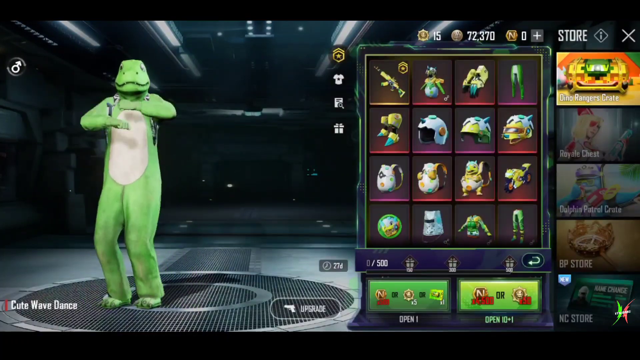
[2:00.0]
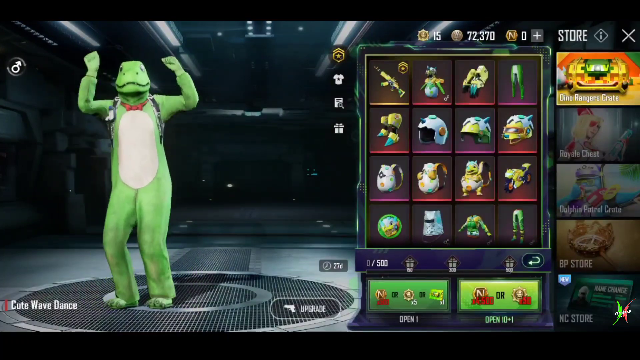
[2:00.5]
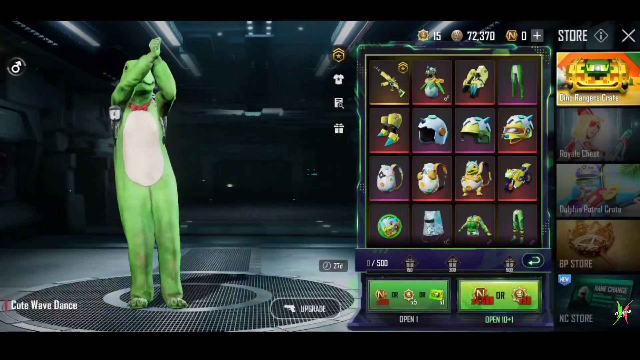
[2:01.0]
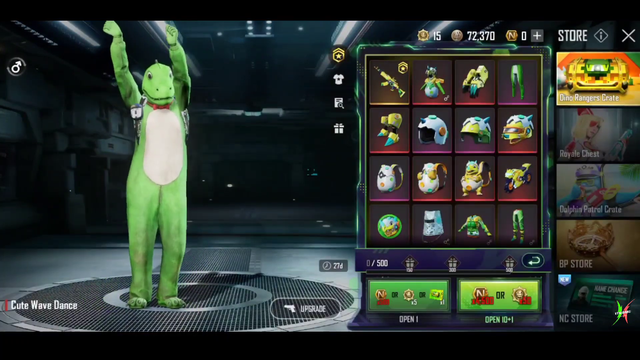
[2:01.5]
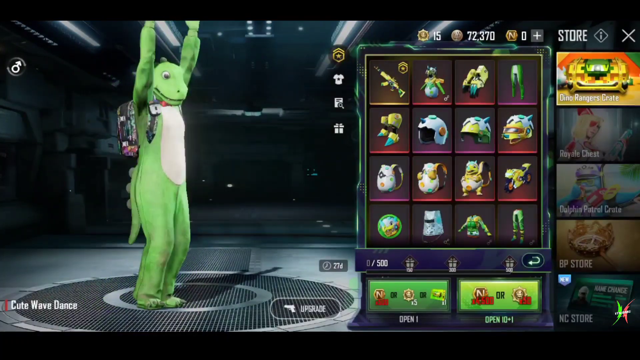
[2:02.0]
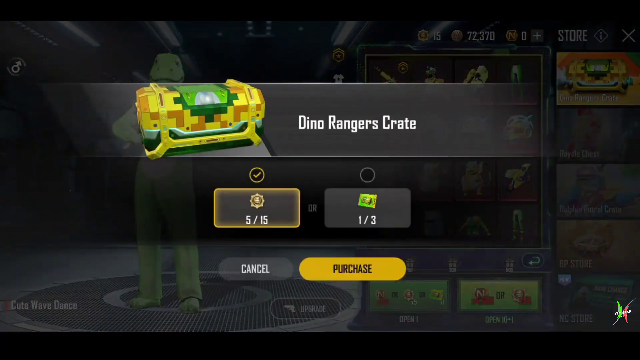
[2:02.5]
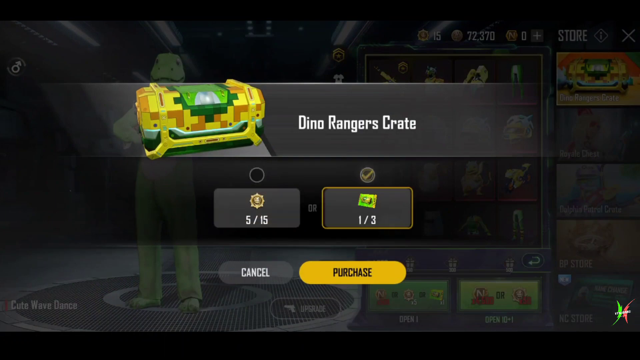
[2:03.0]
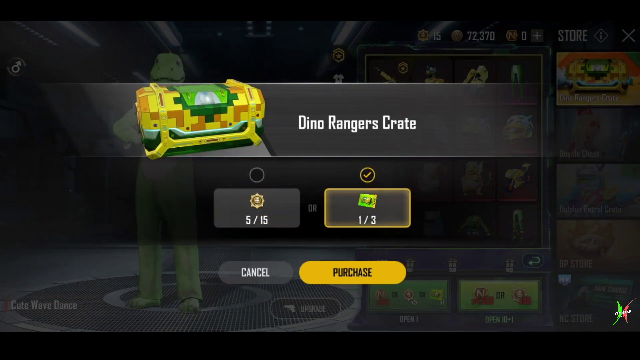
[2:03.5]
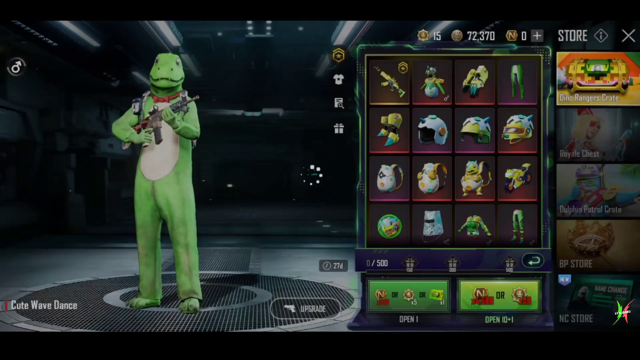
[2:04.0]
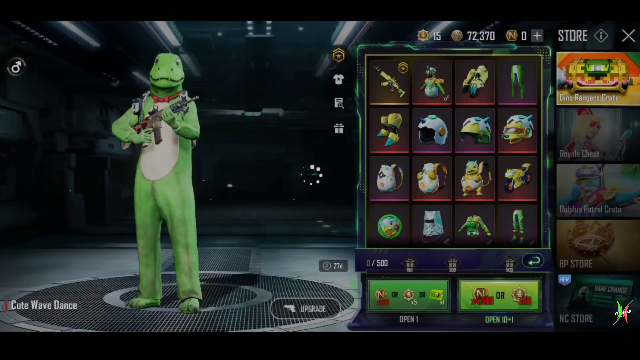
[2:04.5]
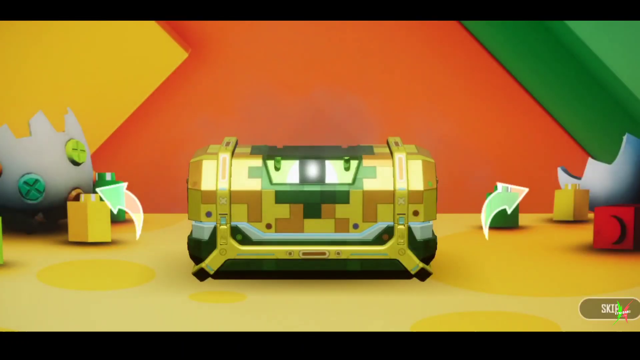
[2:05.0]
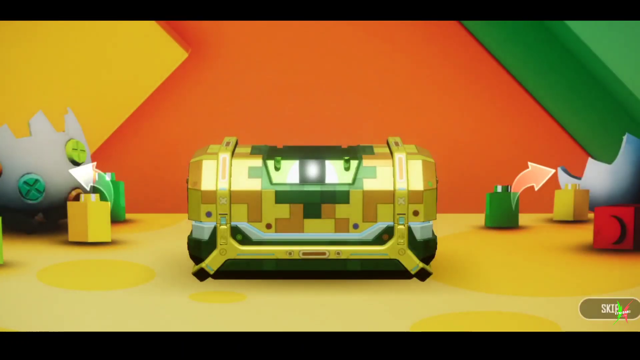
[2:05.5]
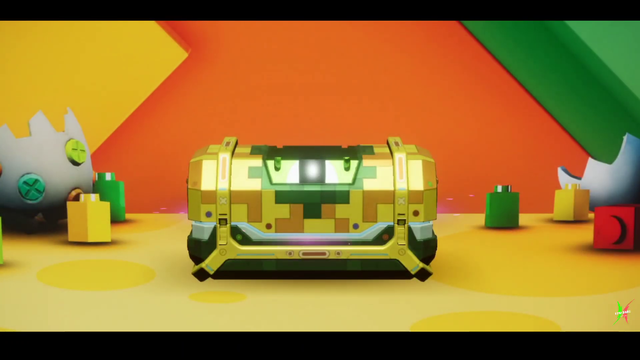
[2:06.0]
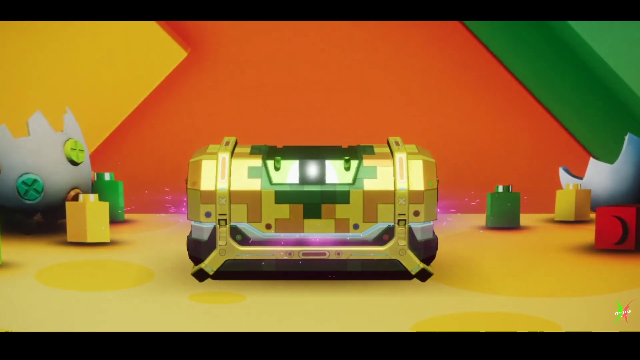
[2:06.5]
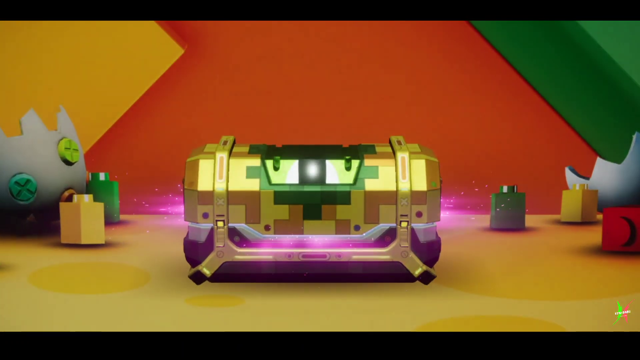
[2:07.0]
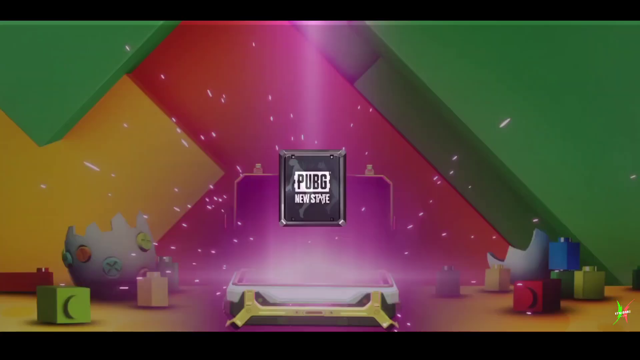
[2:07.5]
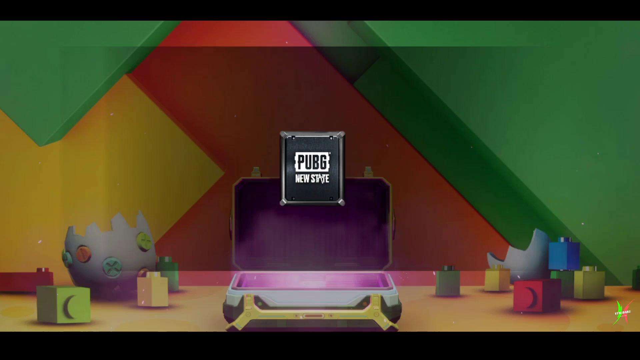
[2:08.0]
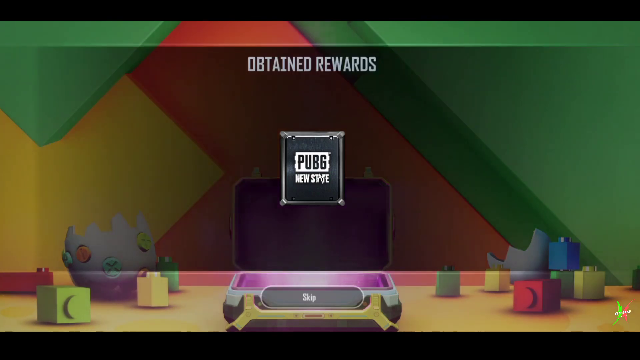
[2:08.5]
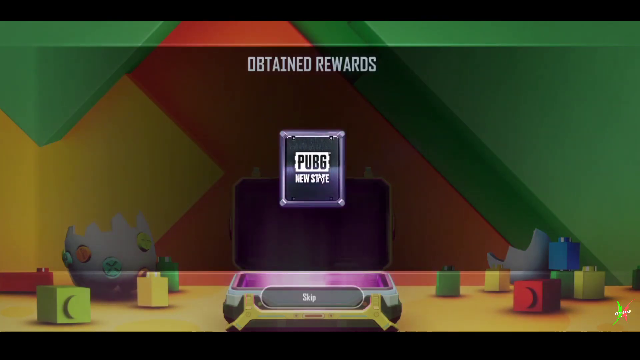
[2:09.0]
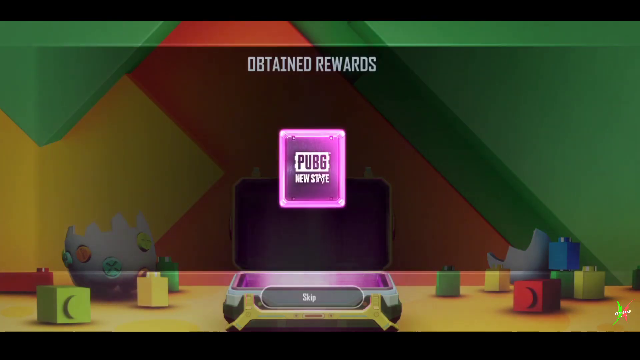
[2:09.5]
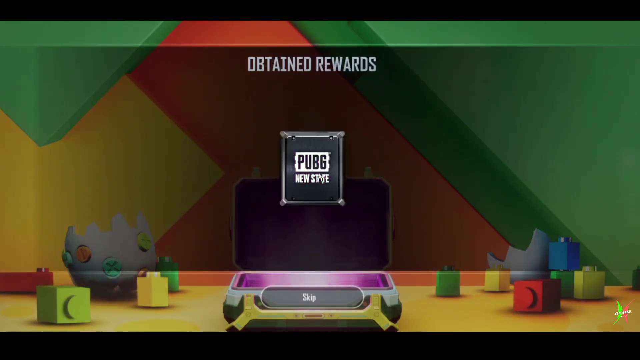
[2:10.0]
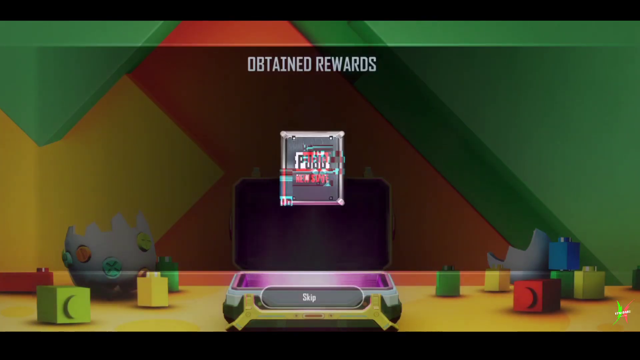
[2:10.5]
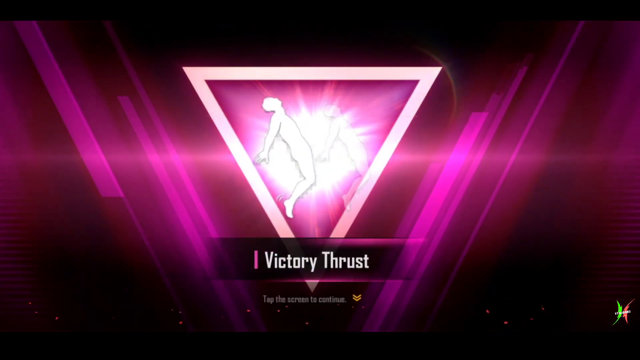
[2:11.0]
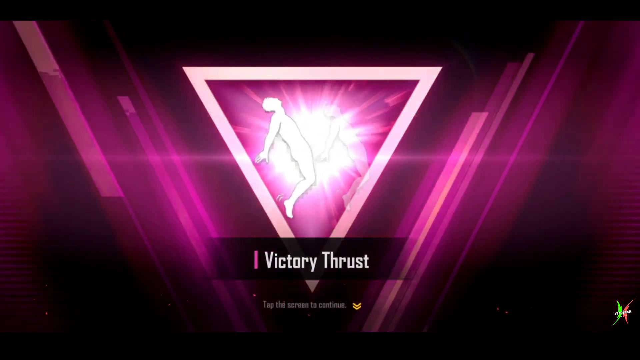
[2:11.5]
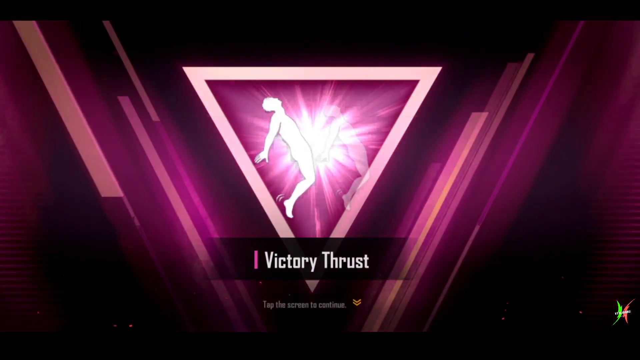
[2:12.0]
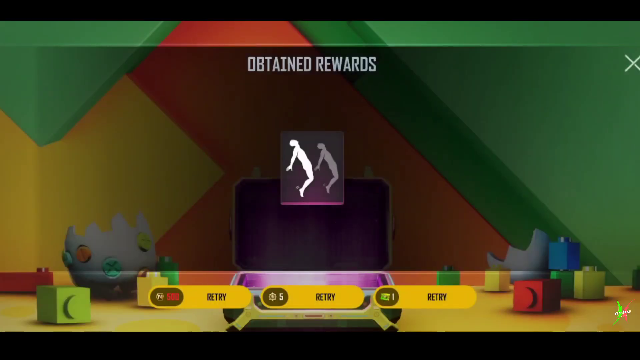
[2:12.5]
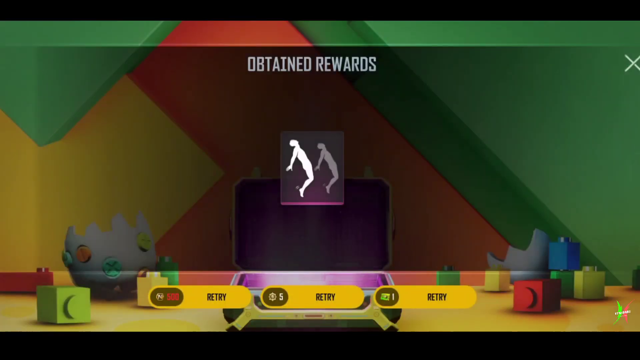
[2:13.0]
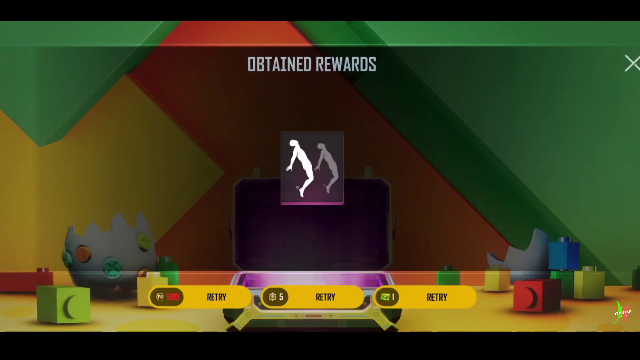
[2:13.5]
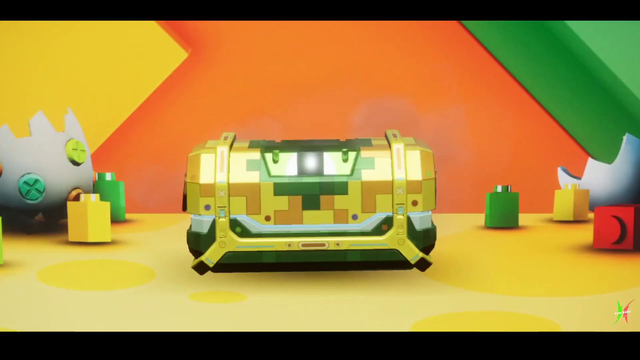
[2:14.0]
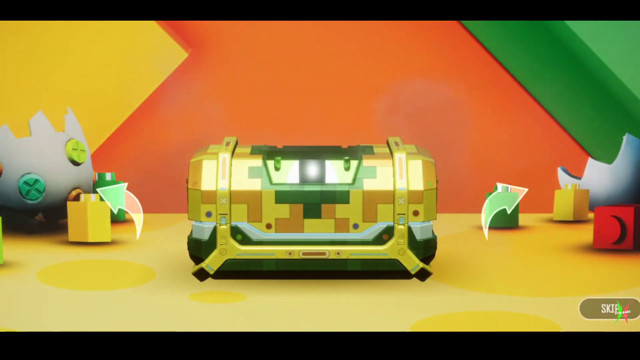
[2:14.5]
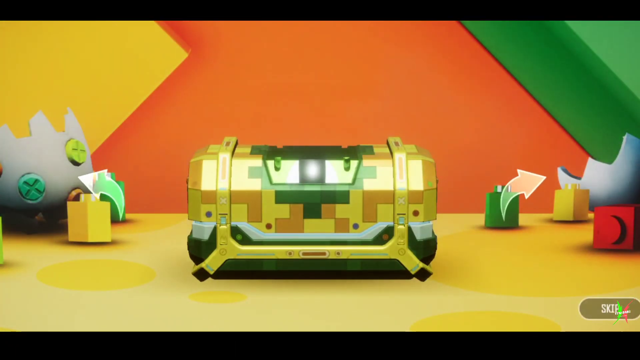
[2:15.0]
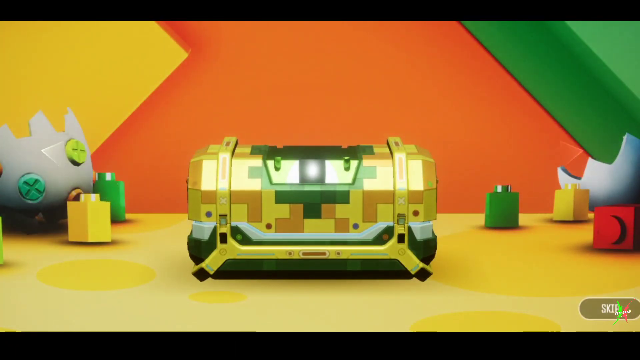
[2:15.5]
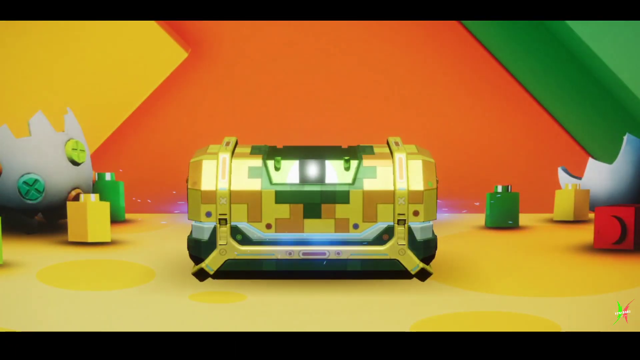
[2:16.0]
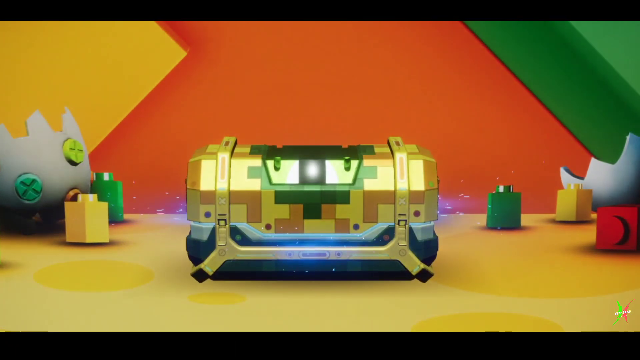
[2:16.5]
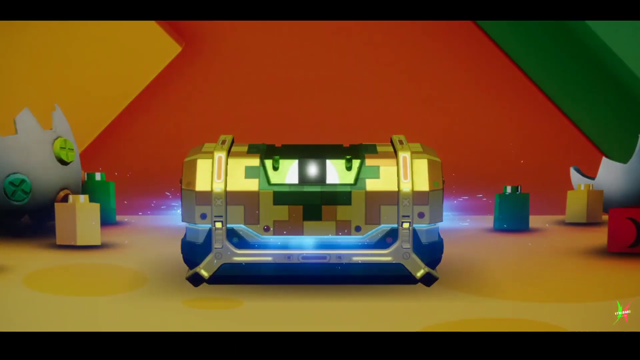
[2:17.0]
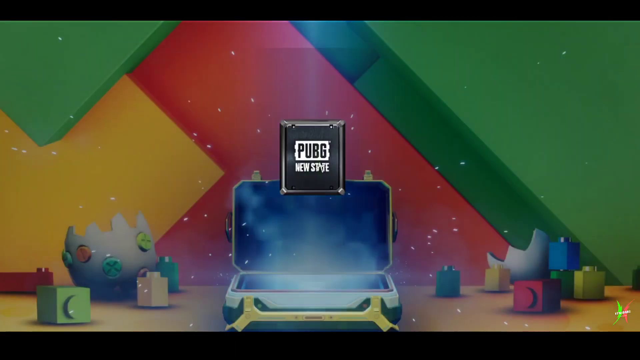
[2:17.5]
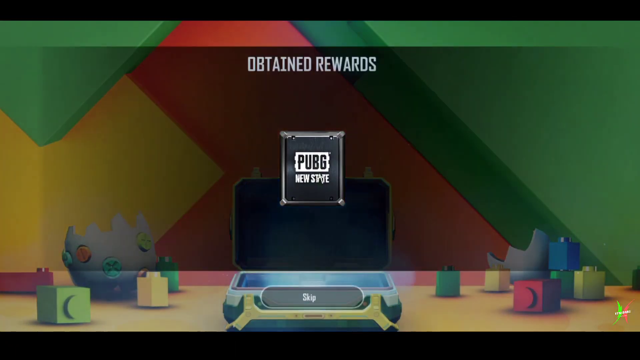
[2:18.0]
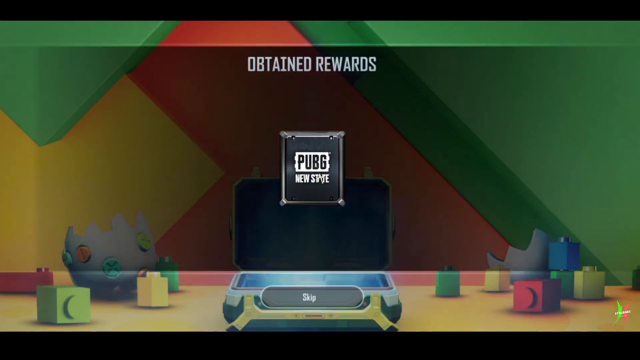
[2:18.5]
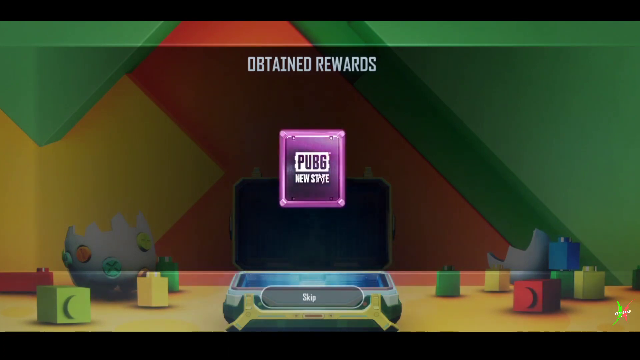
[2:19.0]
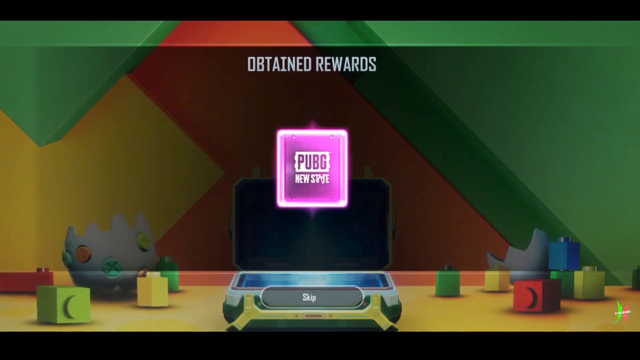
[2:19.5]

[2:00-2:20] A Dino Rangers crates screen appears, with the crate at the top left and white text to the right reading "DinoRangers crate." The currency shows 5/15 of the sheriff star, with an "or" option of 1/3. The selection is on 5/15, with a grey "cancel" option and a yellow "purchase" option. The individual then selects the right side, the dinosaur crates 1/3. As it opens, a loot box animation plays, with toy blocks almost like Legos, a broken egg shell, and the colors green, yellow, red and orange in the background. The crate opens with an animation that shoots out a bright yellow light. The individual chooses skip at the bottom right and receives "victory thrust," an individual thrusting in the air. They open a second crate, which is blue, and receive a different cosmetic.